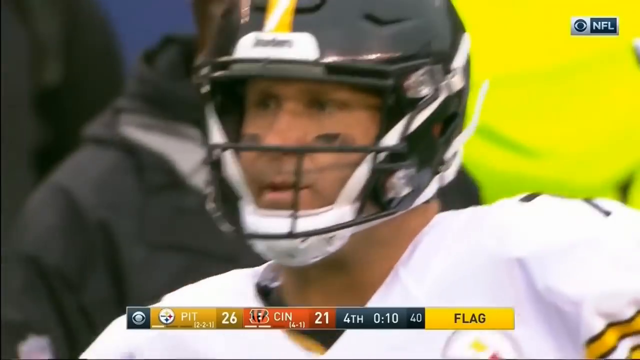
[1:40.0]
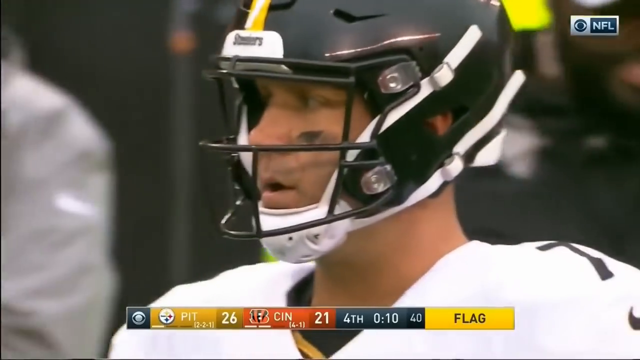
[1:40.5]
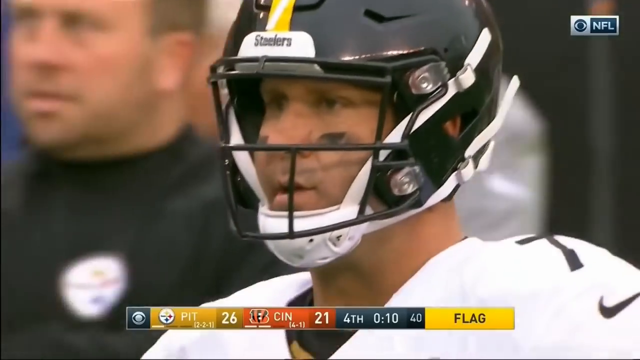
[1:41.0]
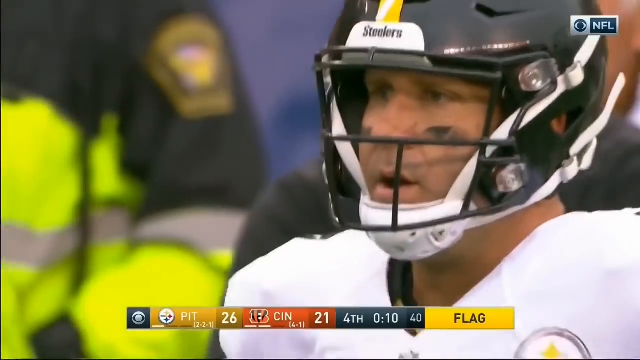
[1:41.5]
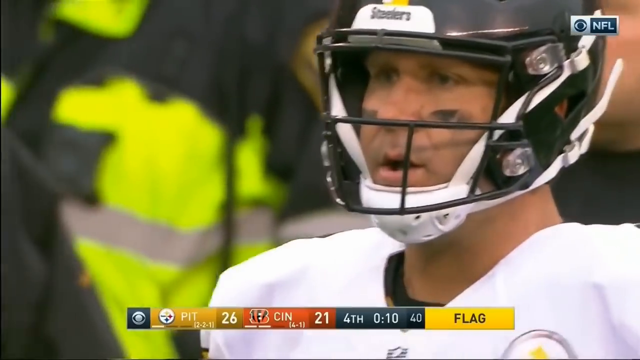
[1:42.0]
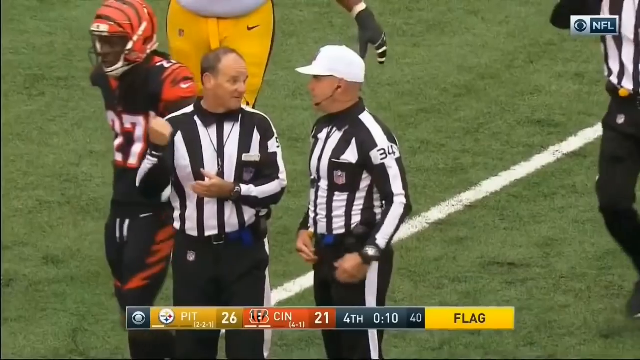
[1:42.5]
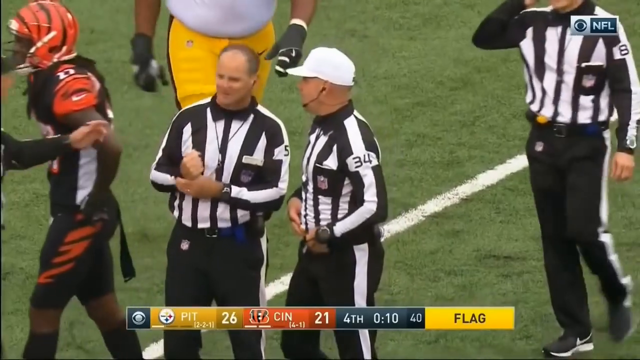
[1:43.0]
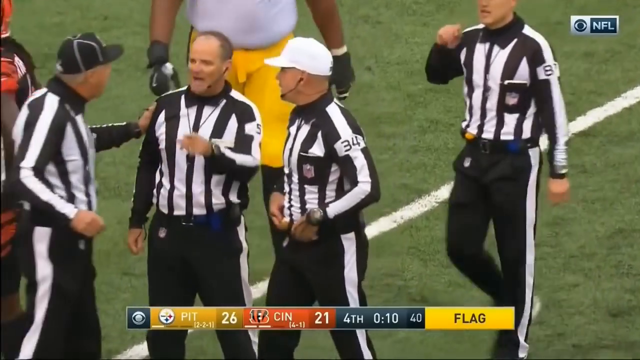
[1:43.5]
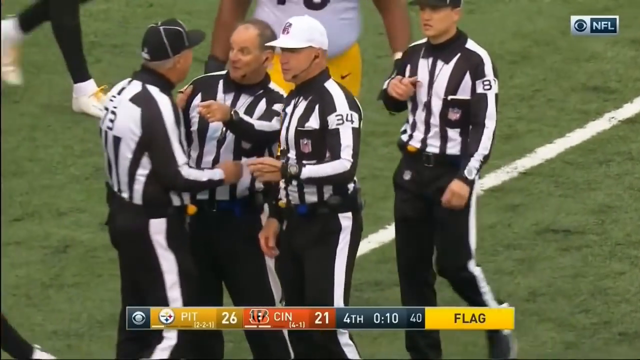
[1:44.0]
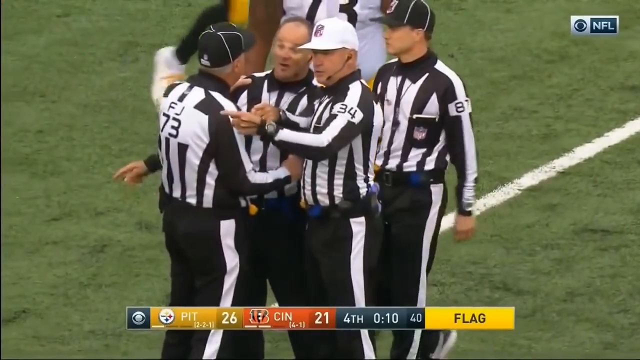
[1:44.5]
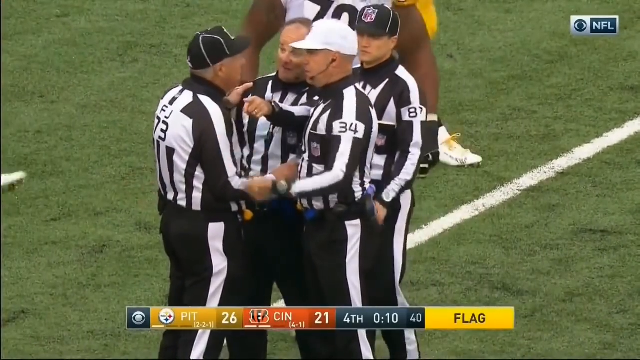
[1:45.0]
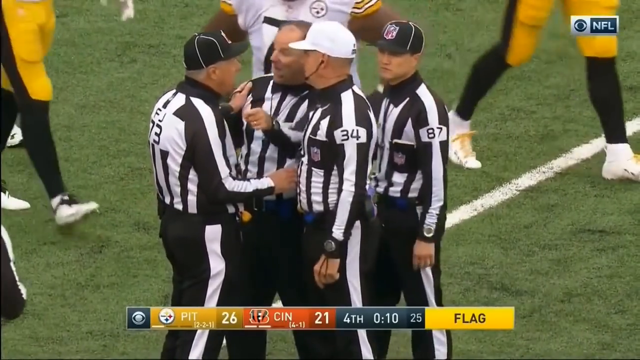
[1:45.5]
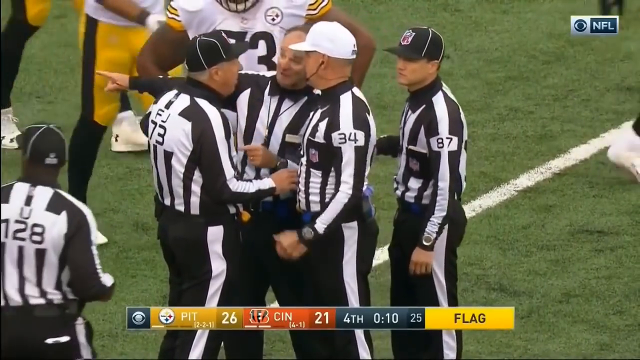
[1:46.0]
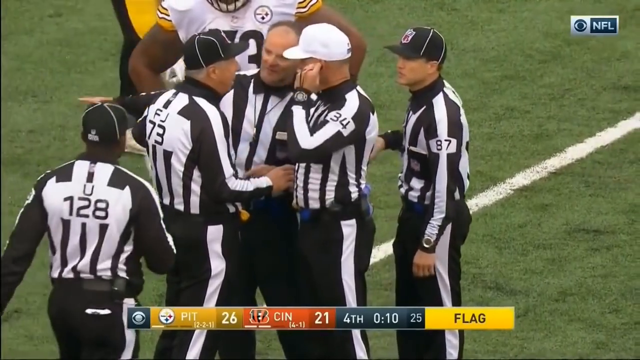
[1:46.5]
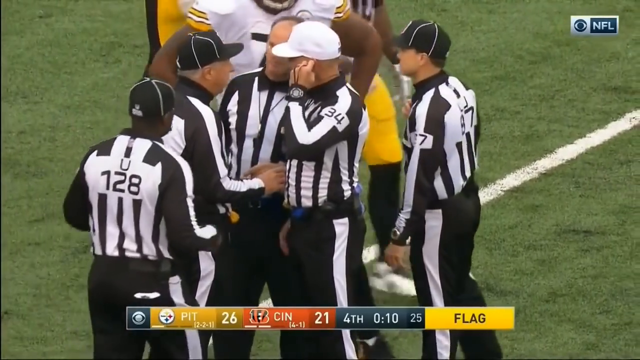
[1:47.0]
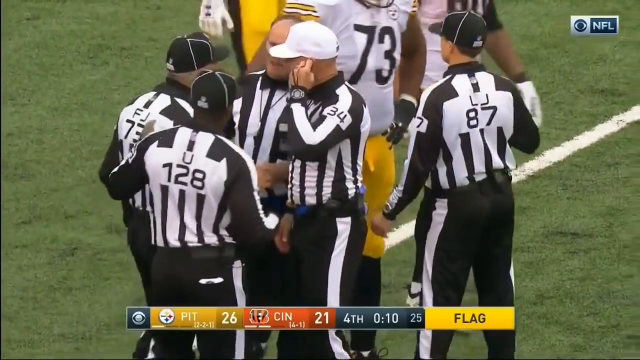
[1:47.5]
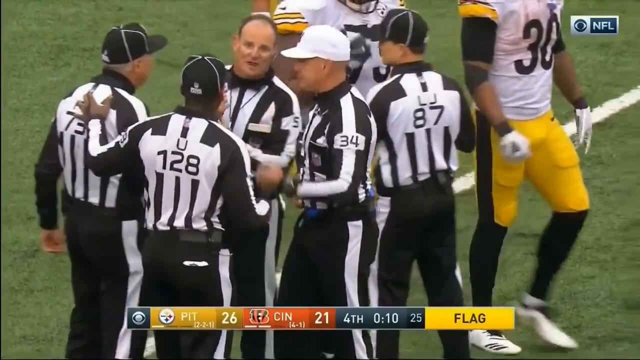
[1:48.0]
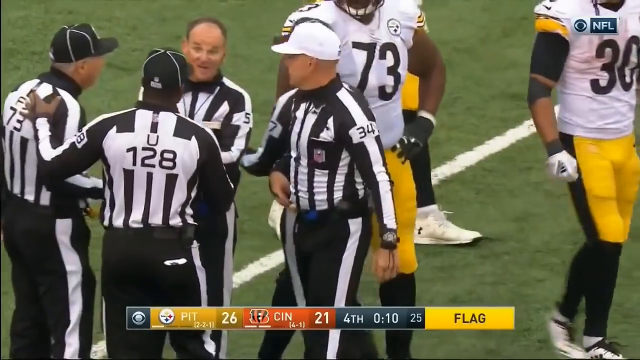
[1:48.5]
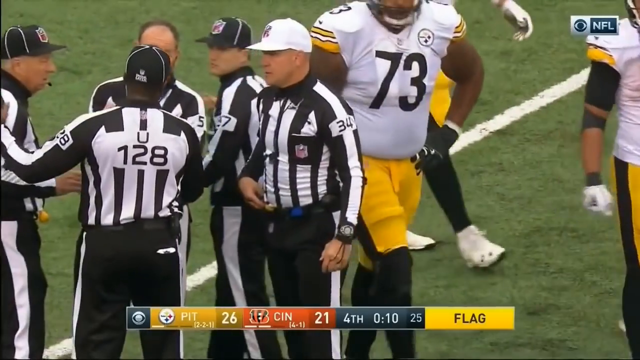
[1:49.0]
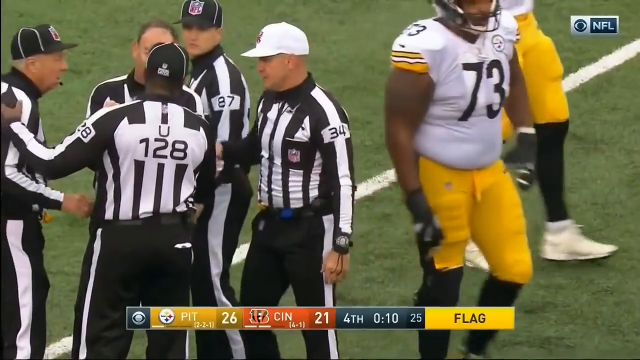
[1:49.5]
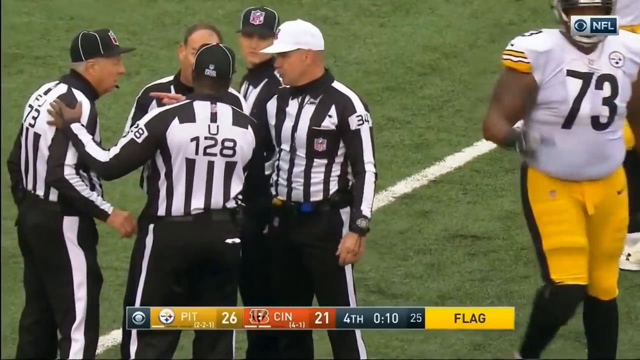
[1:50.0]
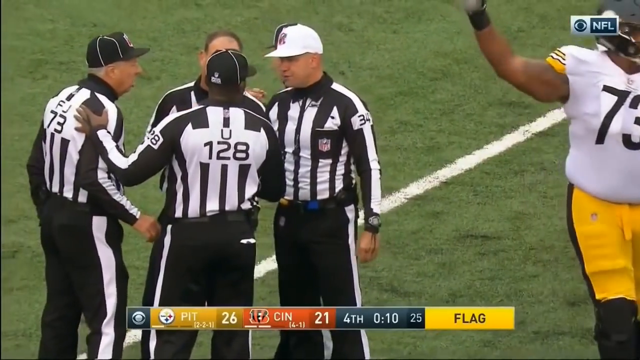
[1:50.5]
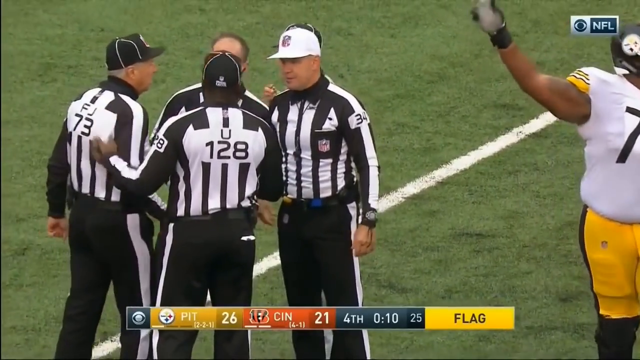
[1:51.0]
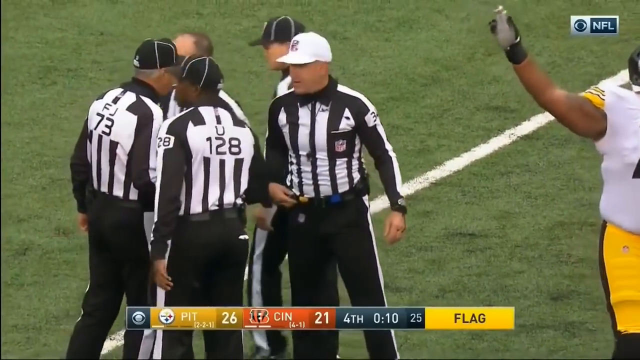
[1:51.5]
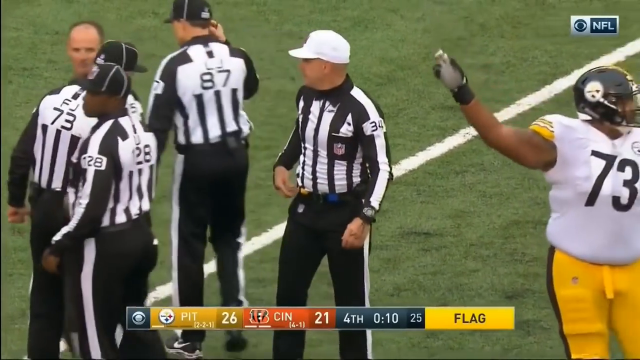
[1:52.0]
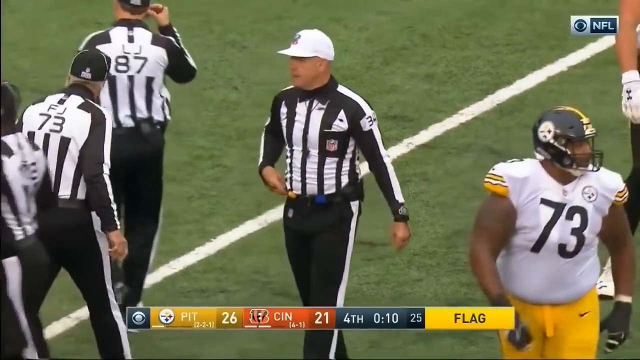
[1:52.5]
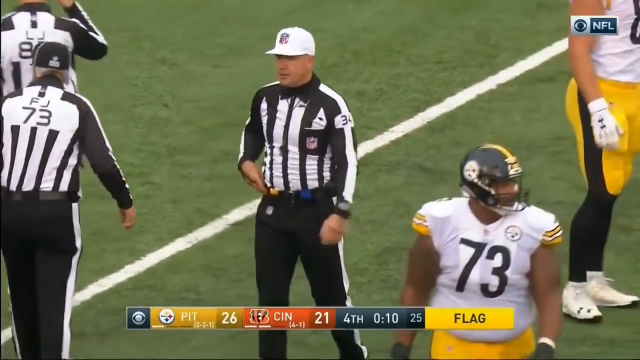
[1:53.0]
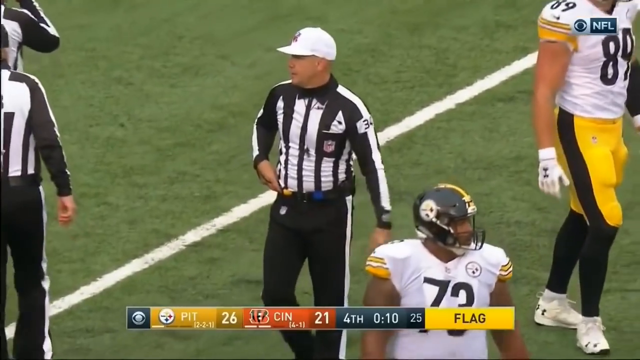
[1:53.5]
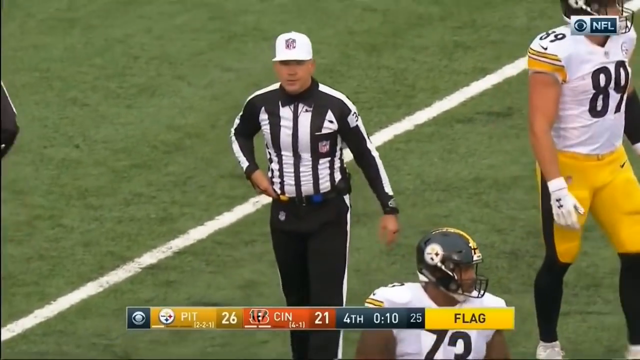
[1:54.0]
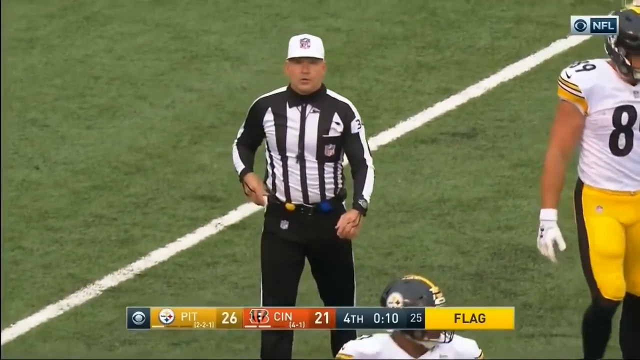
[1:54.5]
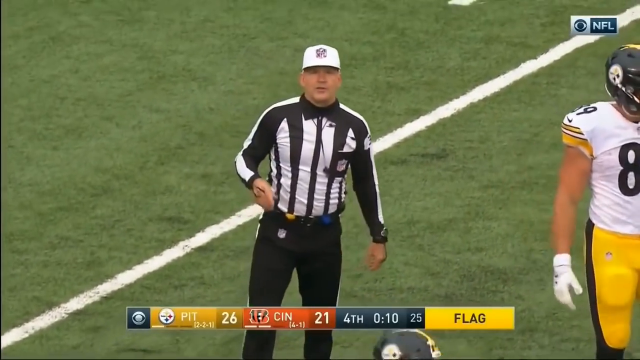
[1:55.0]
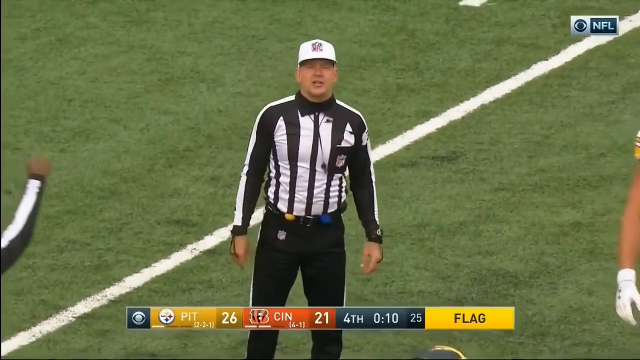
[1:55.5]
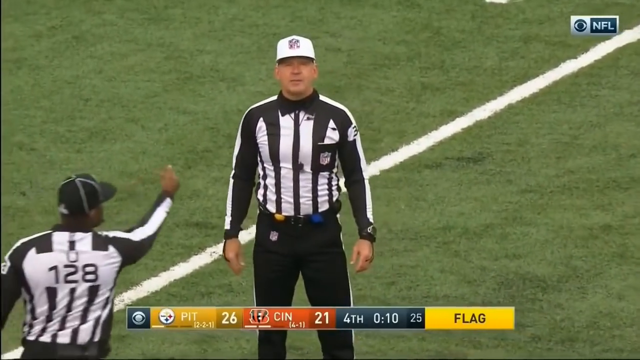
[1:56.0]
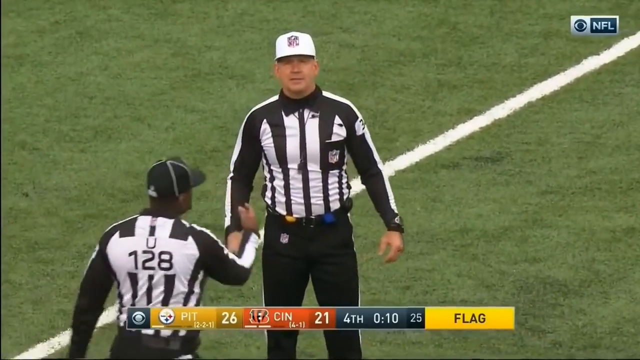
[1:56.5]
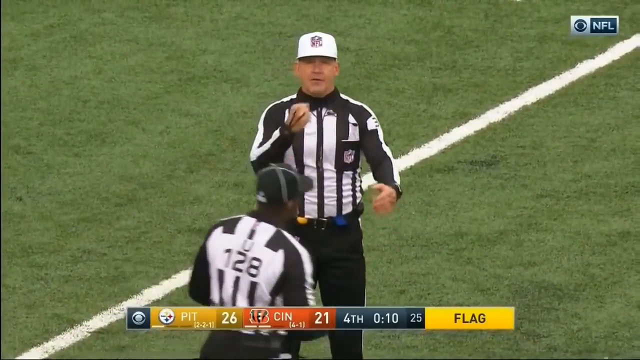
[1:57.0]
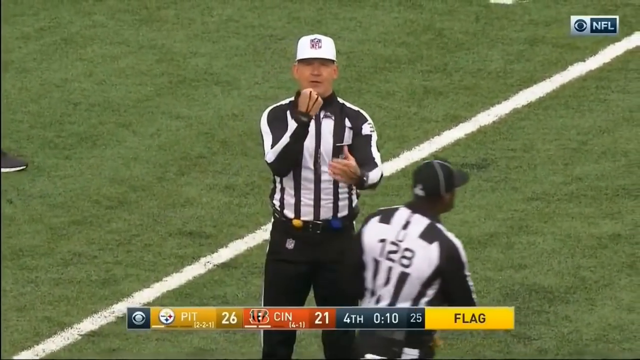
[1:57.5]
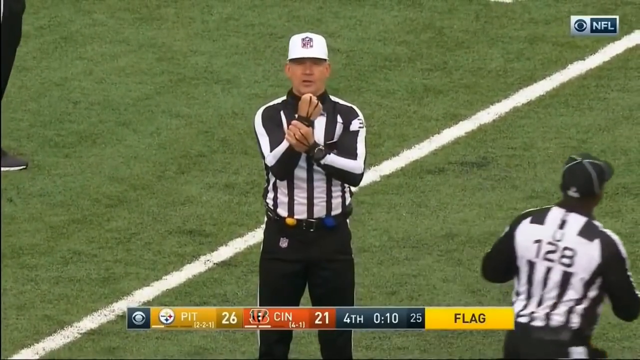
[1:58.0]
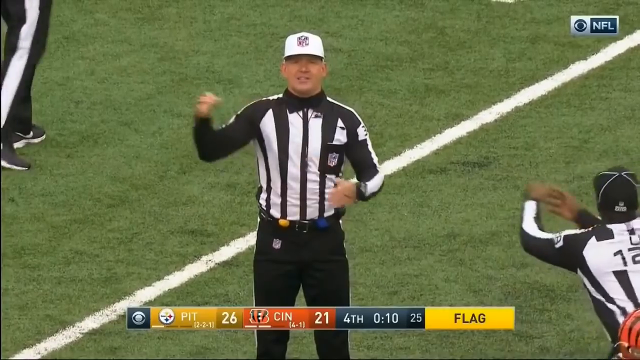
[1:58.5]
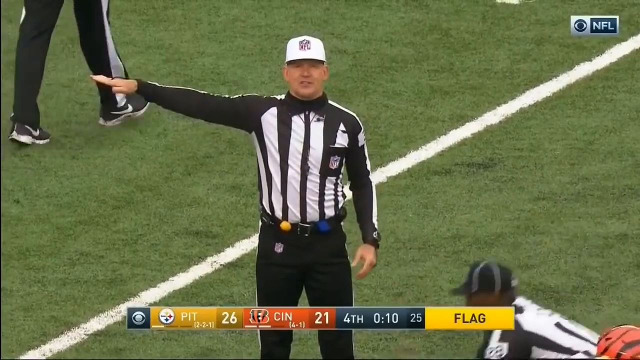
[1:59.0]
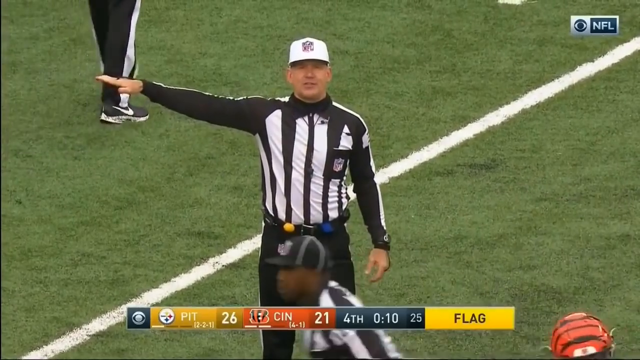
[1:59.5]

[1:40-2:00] Text at the bottom of the screen indicates a flag. A player walks, and the camera zooms in on his face, which has smudges of black paint on his cheeks just under his eyes. Two referees in black and white striped uniforms stand next to each other, talking. The referee on the right wears a white cap and has the number 34 on his left shoulder; the referee on the left has a whistle around his neck and no hat. Two other referees come onto the field, one from the left and one from the right, approaching the pair, and they appear to group together to talk. A fifth referee comes onto the field, and they all group together, discussing the play. To the right, some Pittsburgh Steelers players walk around.